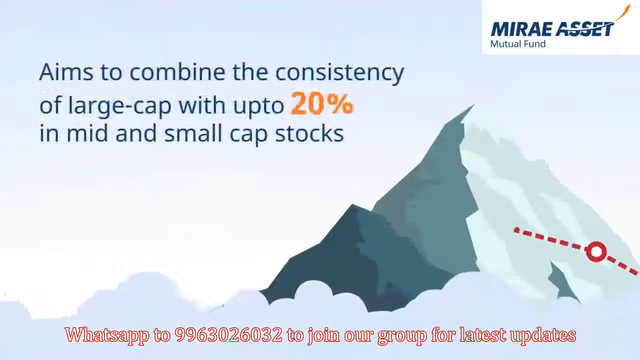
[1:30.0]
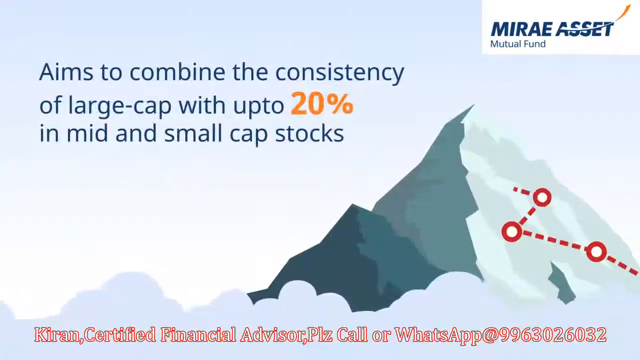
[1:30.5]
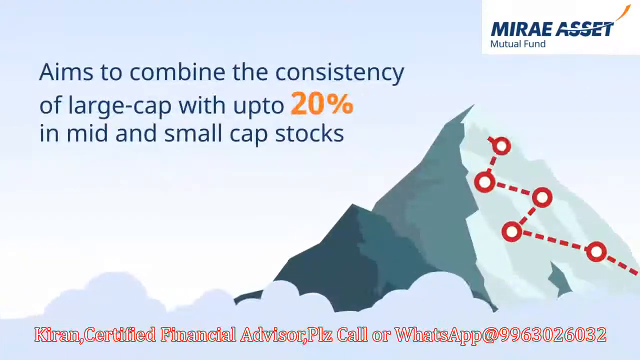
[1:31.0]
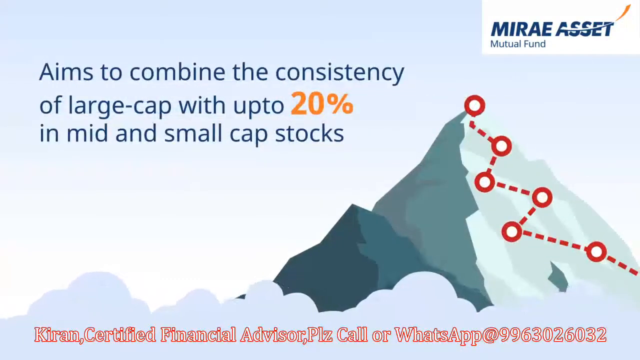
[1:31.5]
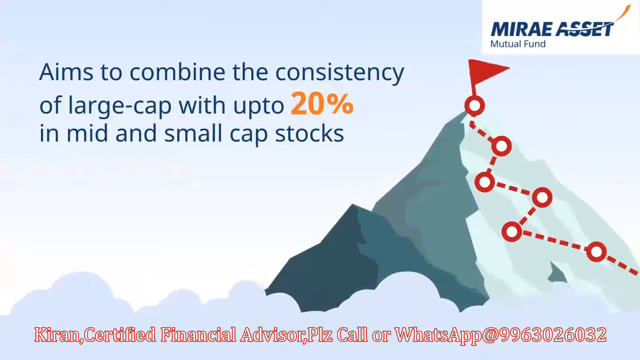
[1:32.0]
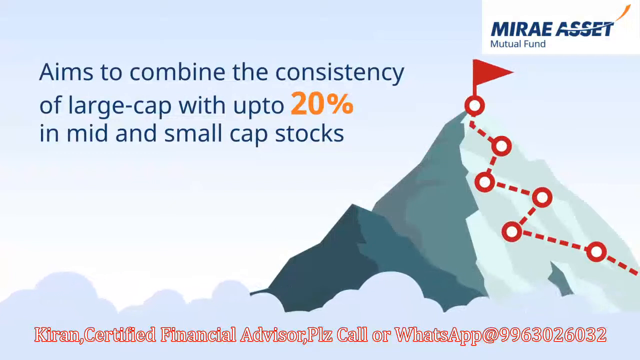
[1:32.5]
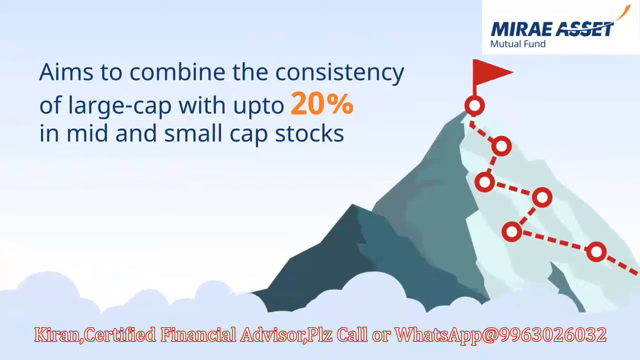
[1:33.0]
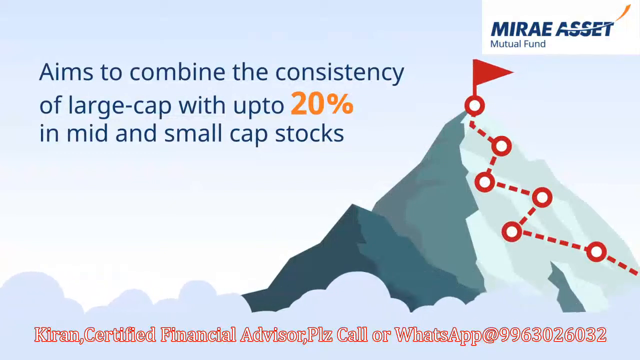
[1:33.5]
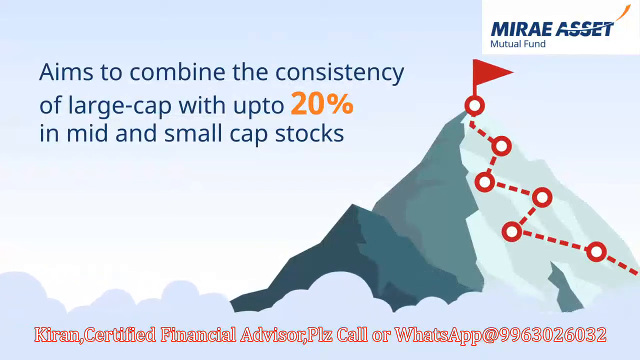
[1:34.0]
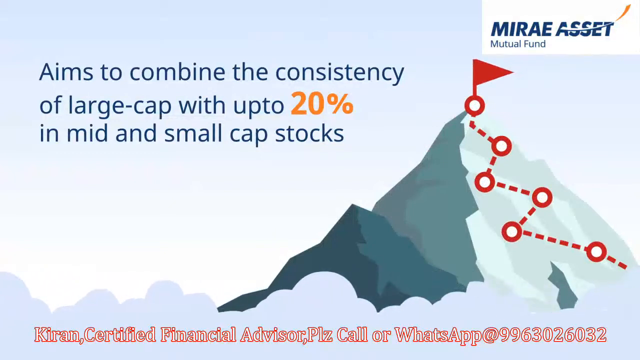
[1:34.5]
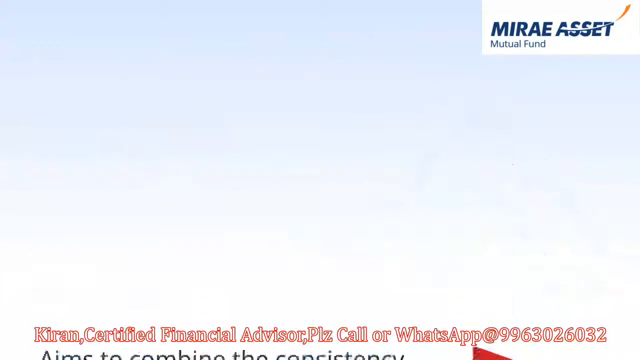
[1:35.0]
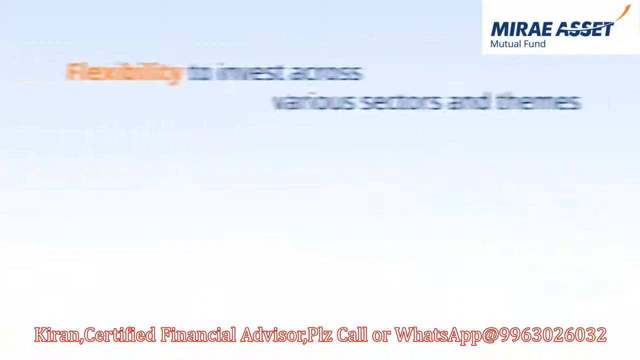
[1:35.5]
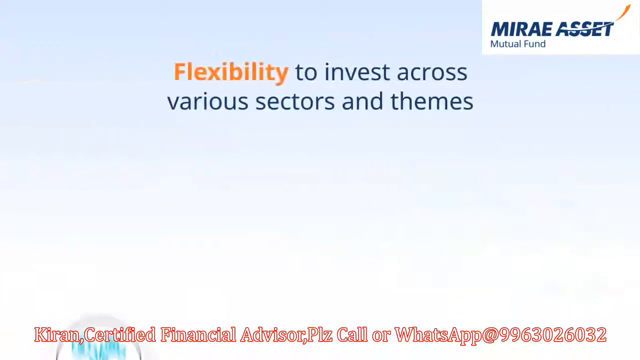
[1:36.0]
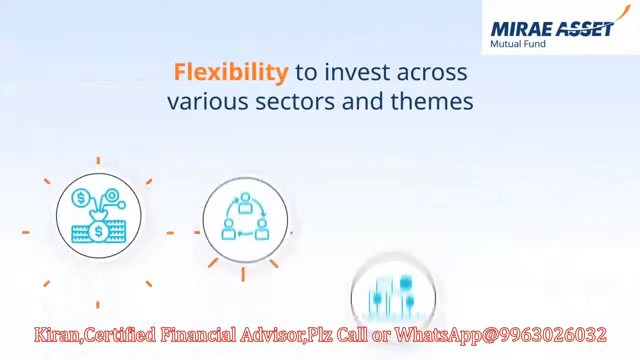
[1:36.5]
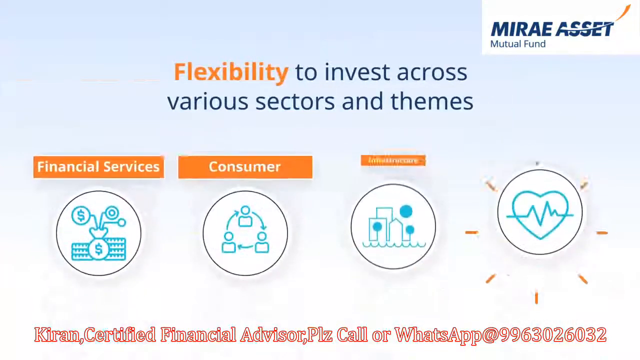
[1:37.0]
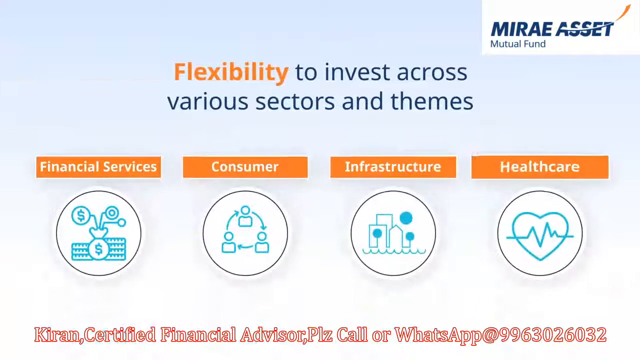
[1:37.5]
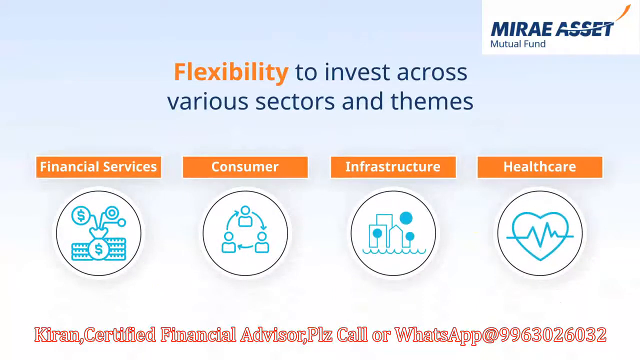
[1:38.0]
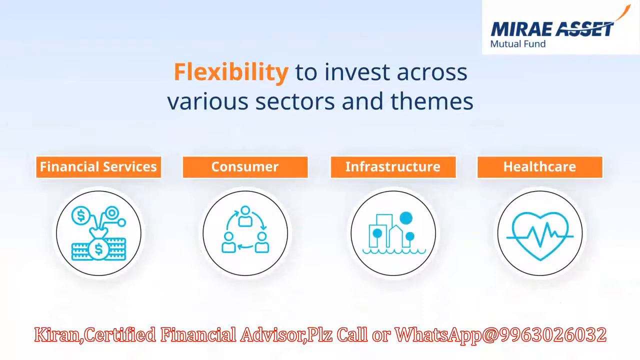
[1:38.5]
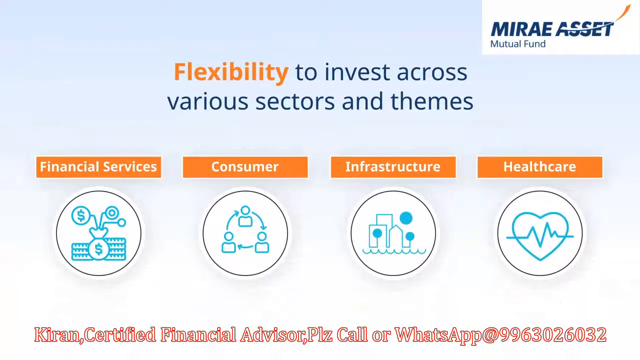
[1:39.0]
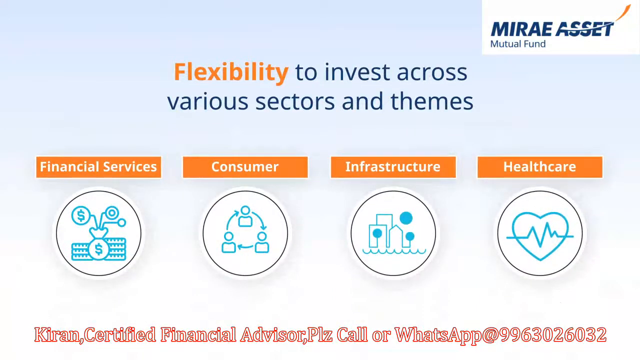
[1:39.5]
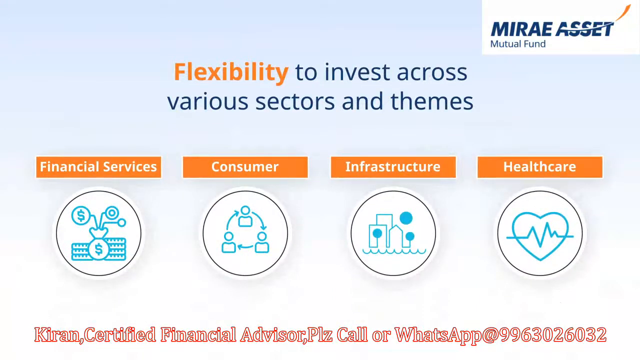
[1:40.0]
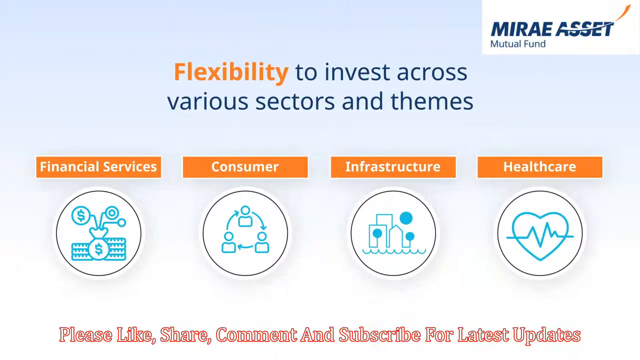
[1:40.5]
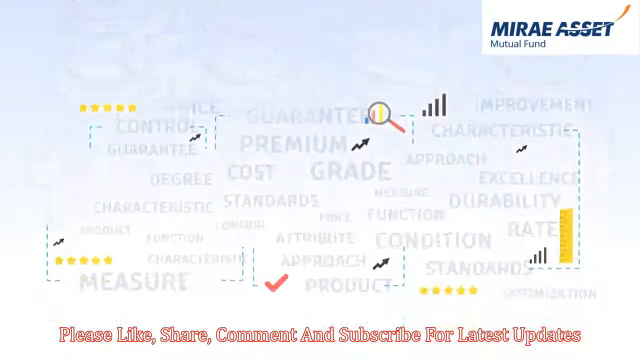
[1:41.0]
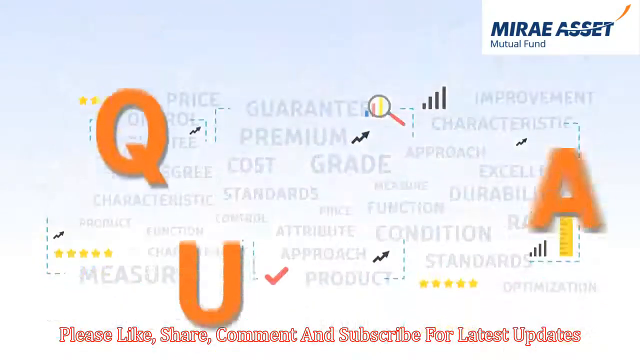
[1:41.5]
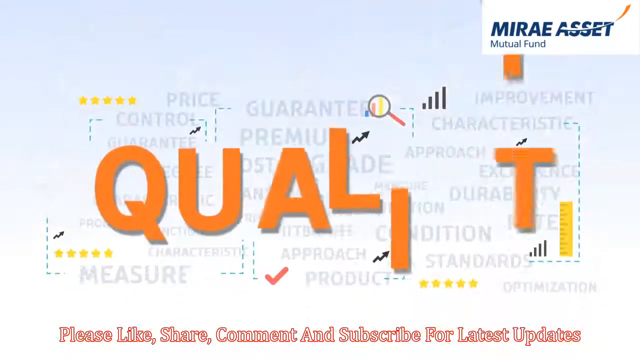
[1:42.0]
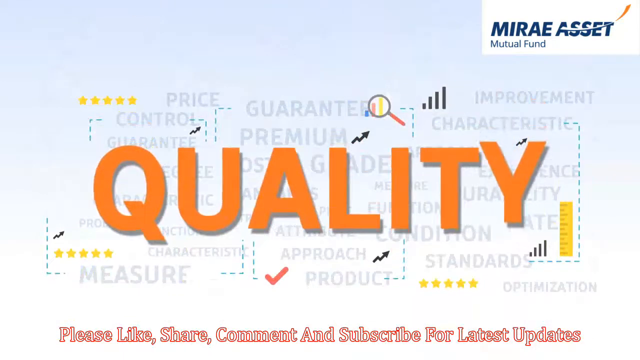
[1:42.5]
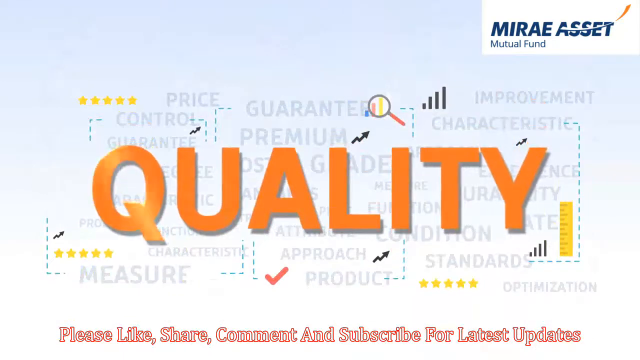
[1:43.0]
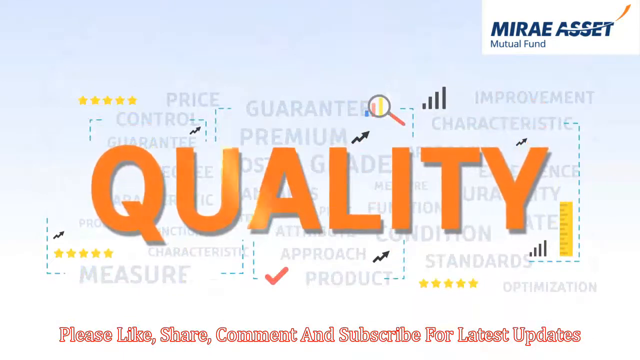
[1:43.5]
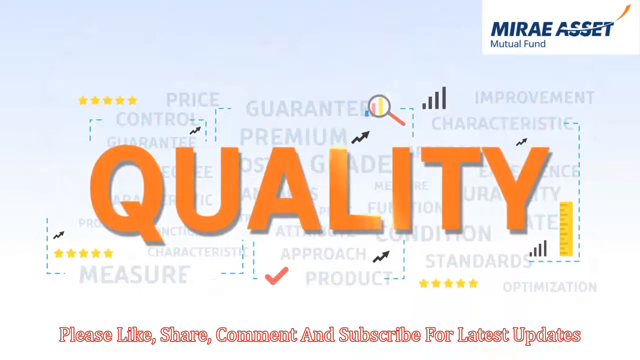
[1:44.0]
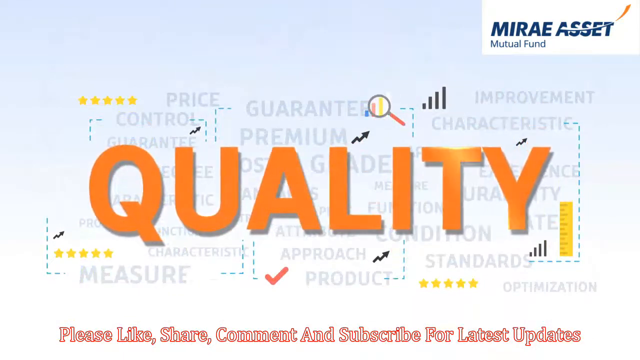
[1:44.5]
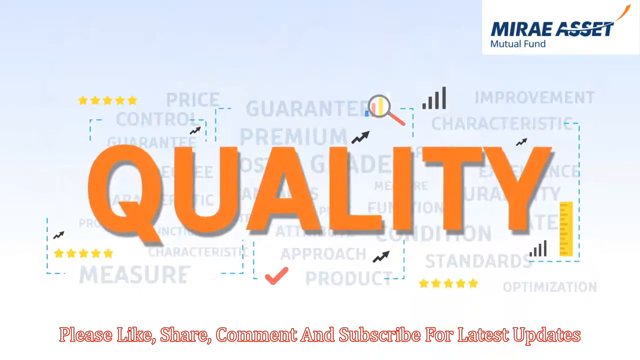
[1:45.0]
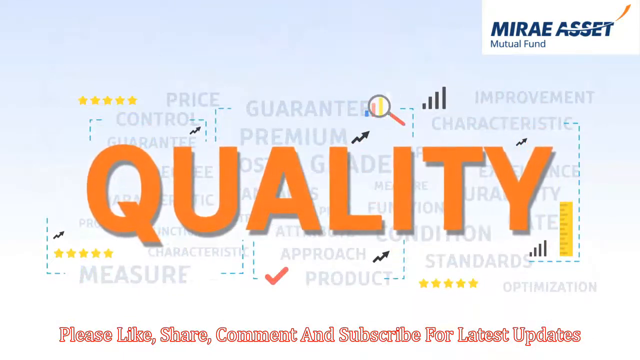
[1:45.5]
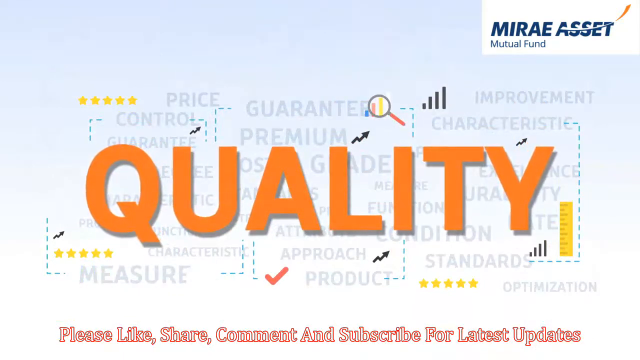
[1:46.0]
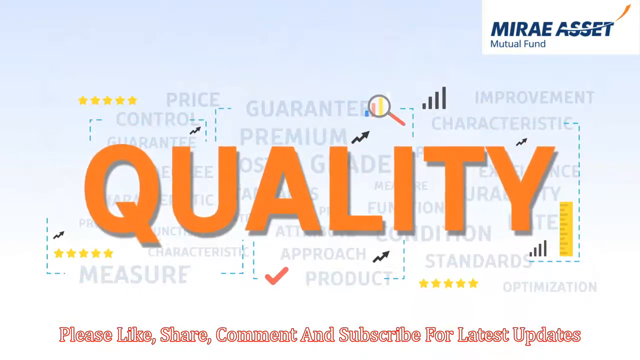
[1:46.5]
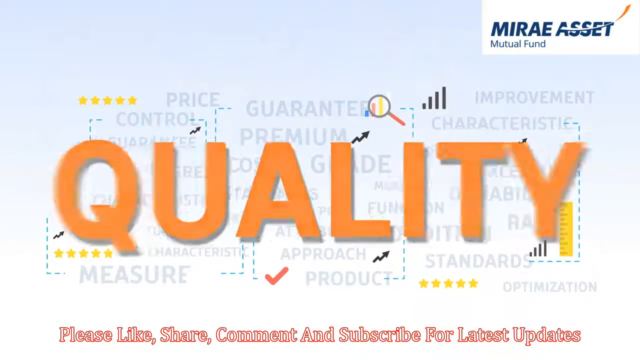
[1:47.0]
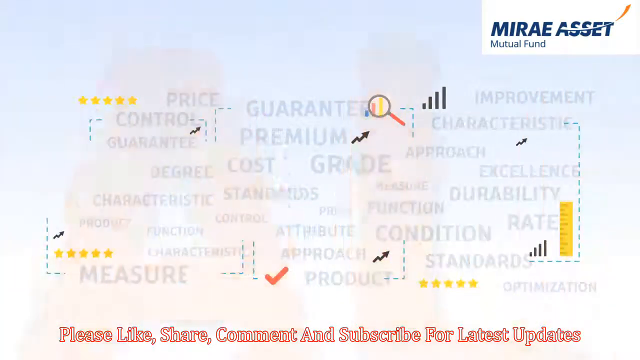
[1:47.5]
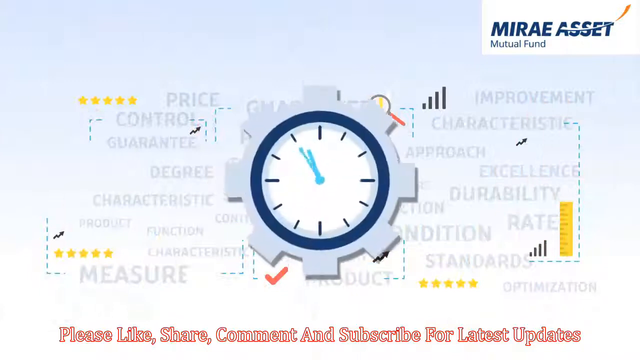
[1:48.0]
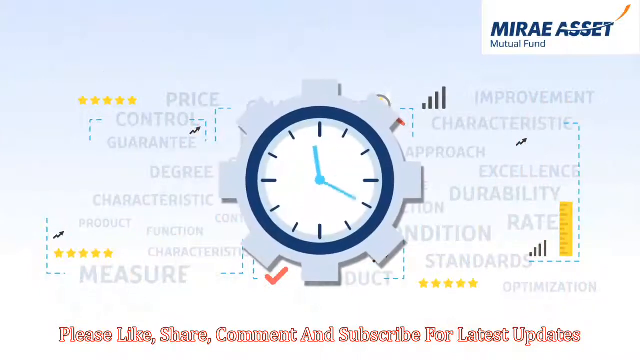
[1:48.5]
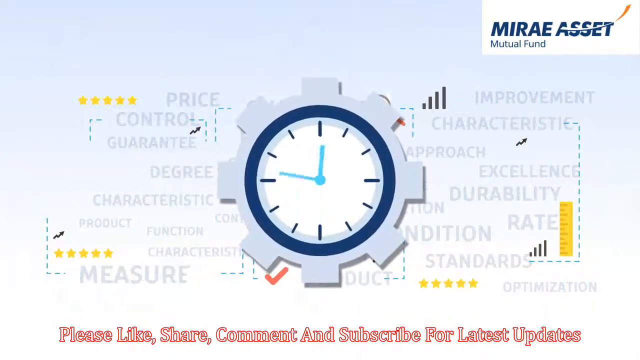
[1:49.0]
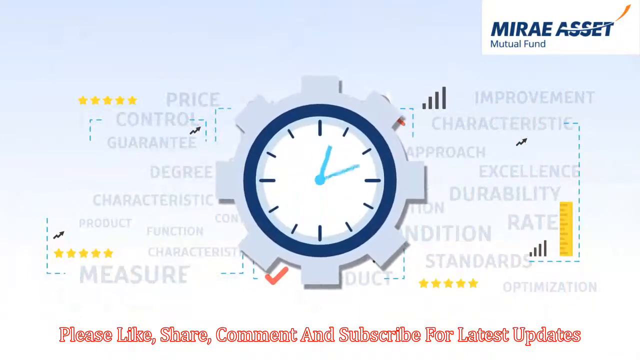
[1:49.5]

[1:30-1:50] A mountain is in the background, and text at the top left reads "aims to combine the consistency of large cap with up to 20% in mid and small cap stocks", with "20%" in orange and the rest in blue. On the mountain, a dotted red path with a circle in the middle appears in the far right corner, and the path moves up, making little target dots in spots, up to a red flag at the top. A new screen reads "flexibility to invest across various sectors and themes" and shows four banners with circular icons underneath: "financial services" on the left, then "consumer", "infrastructure" and "healthcare". The final screen shows "quality" in large orange writing popping out, followed by a clock popping out behind it.